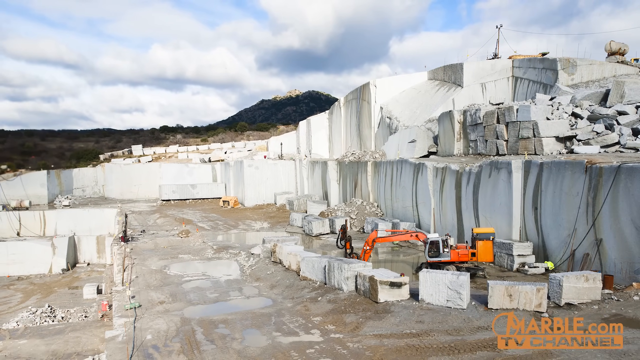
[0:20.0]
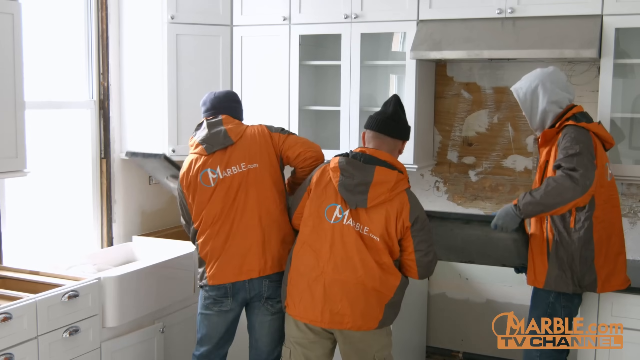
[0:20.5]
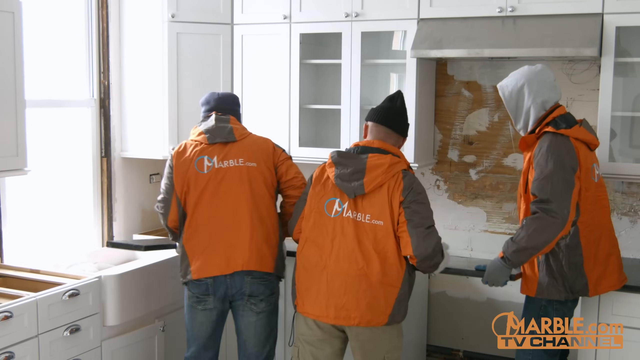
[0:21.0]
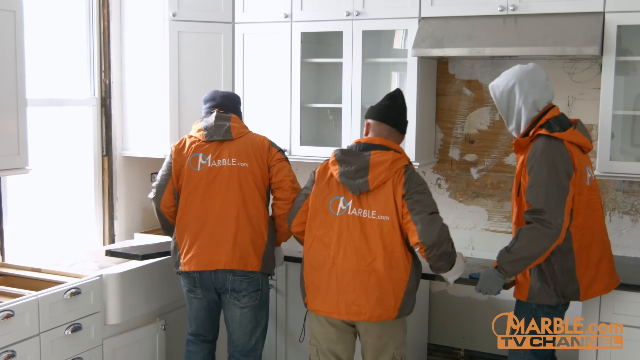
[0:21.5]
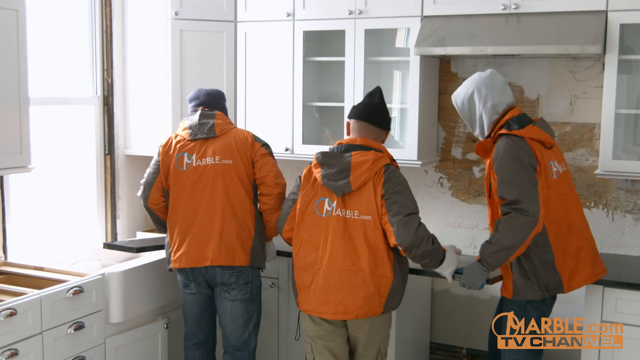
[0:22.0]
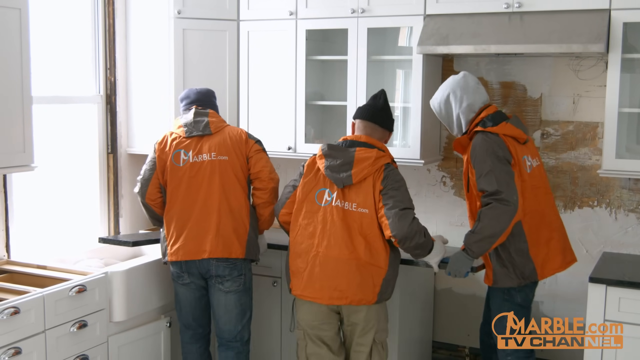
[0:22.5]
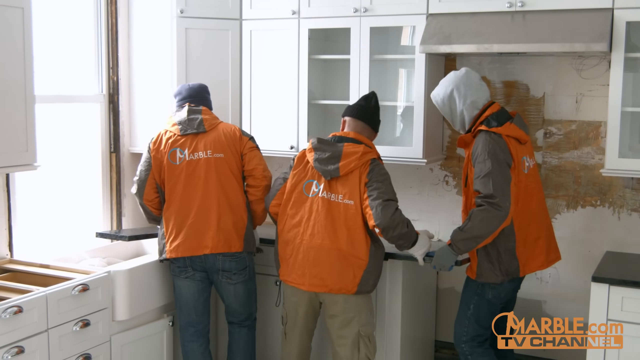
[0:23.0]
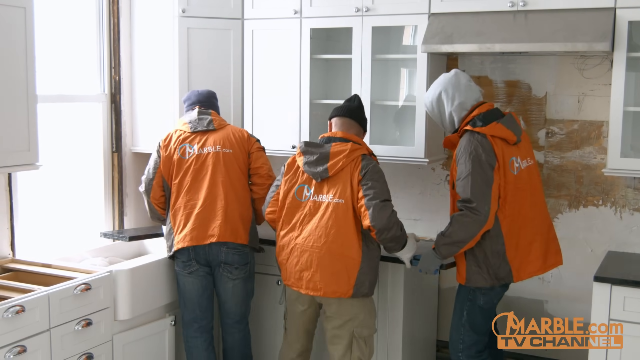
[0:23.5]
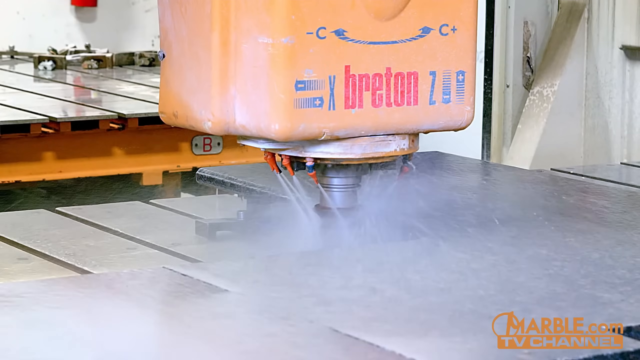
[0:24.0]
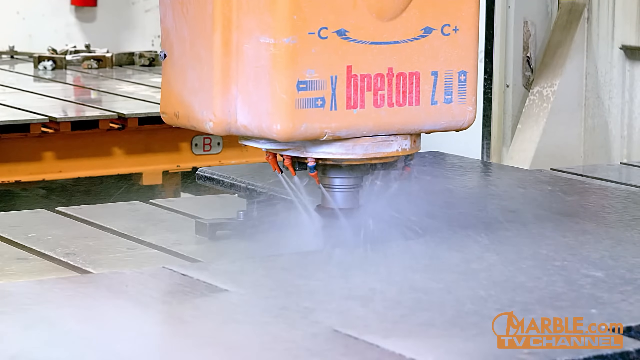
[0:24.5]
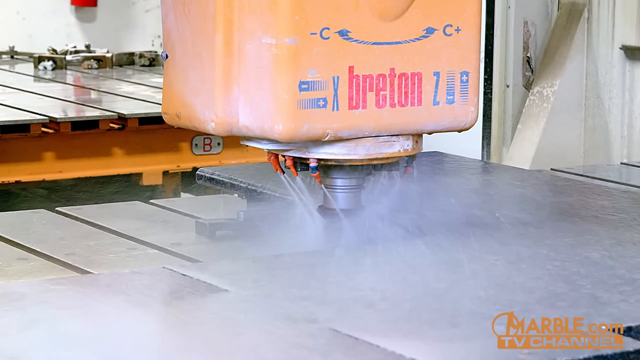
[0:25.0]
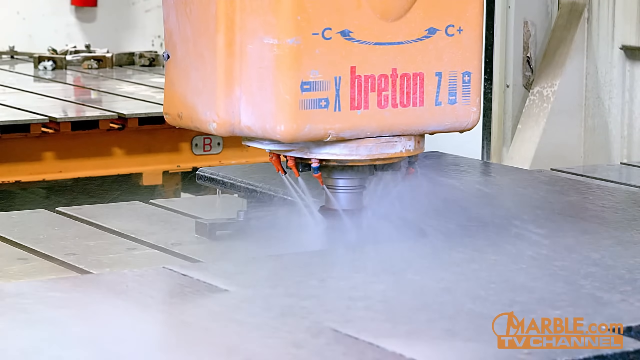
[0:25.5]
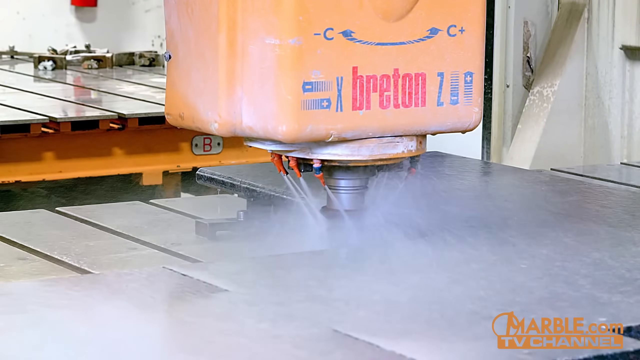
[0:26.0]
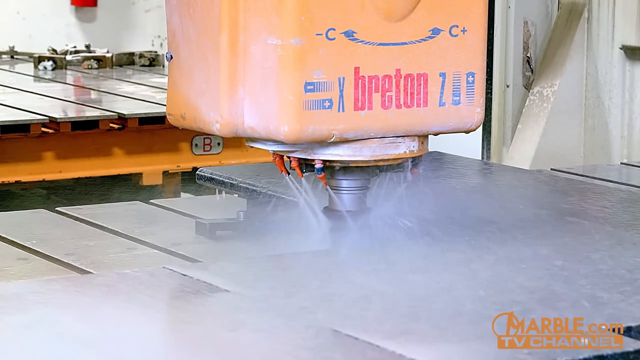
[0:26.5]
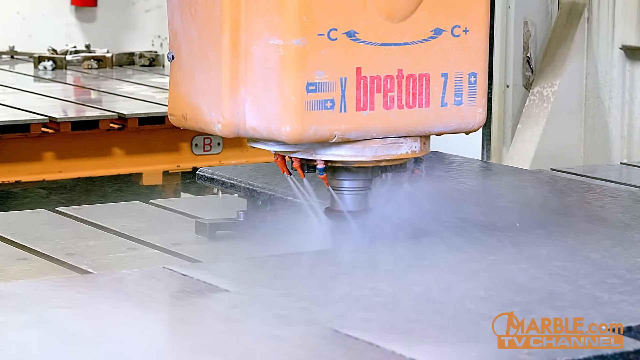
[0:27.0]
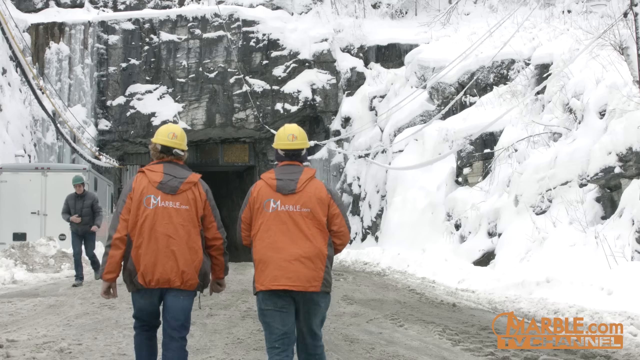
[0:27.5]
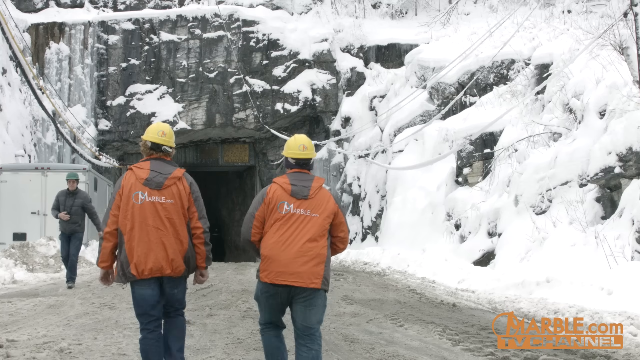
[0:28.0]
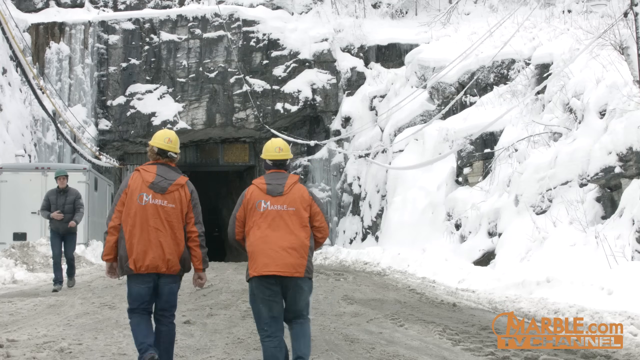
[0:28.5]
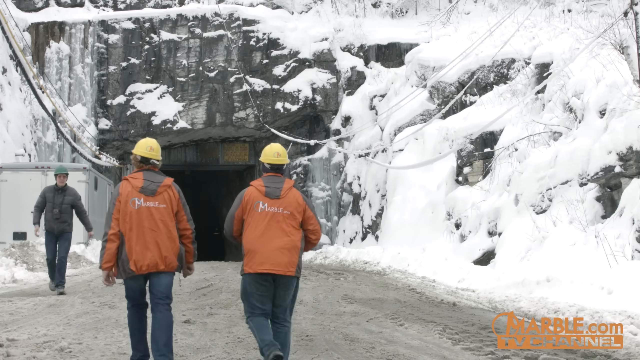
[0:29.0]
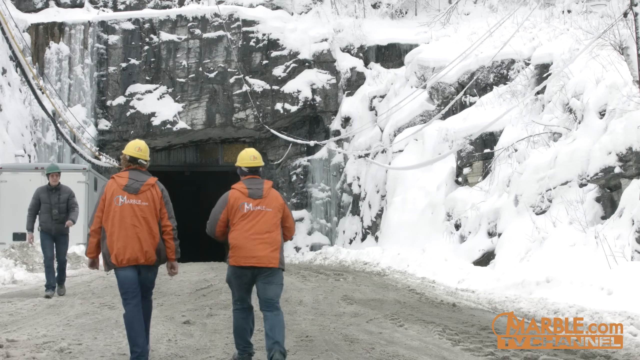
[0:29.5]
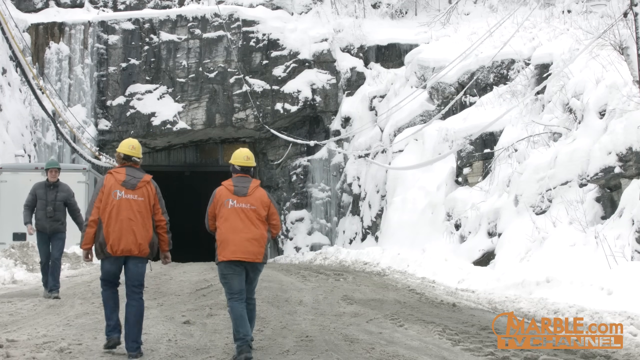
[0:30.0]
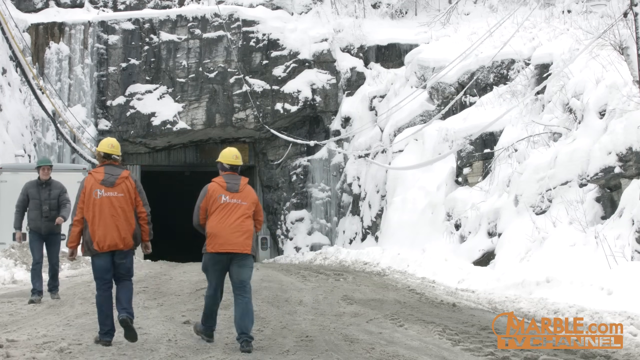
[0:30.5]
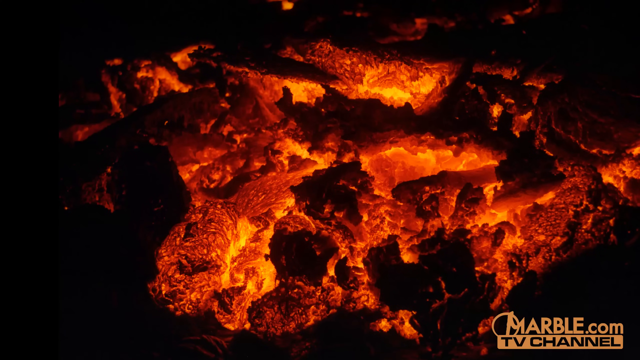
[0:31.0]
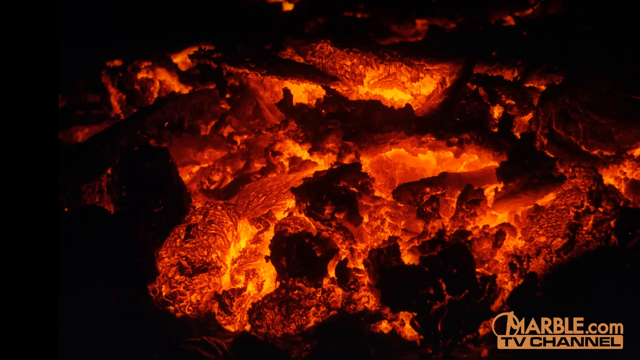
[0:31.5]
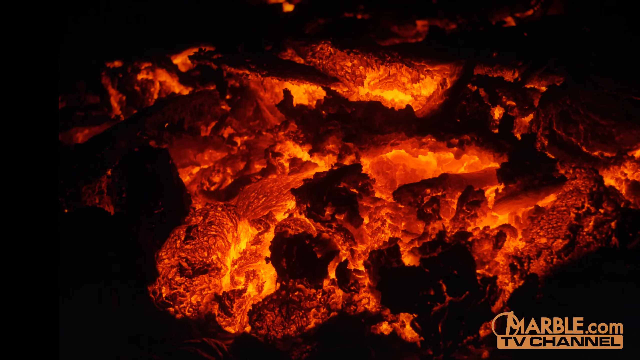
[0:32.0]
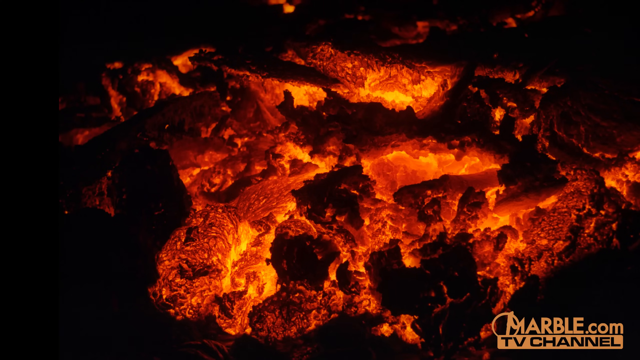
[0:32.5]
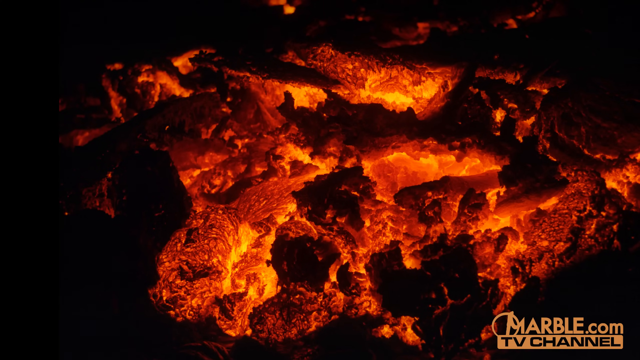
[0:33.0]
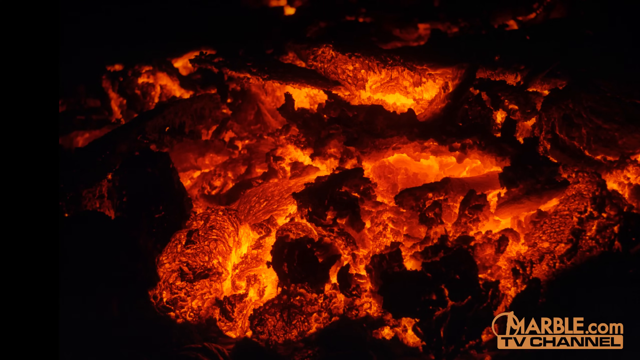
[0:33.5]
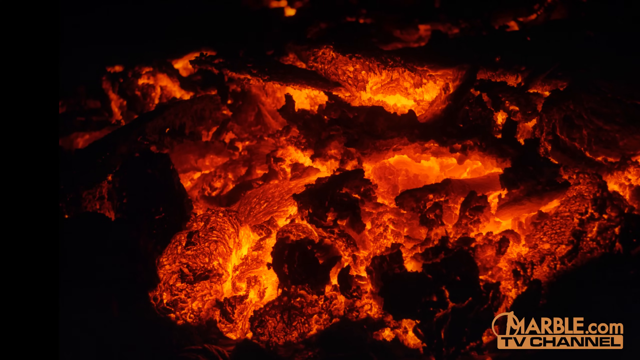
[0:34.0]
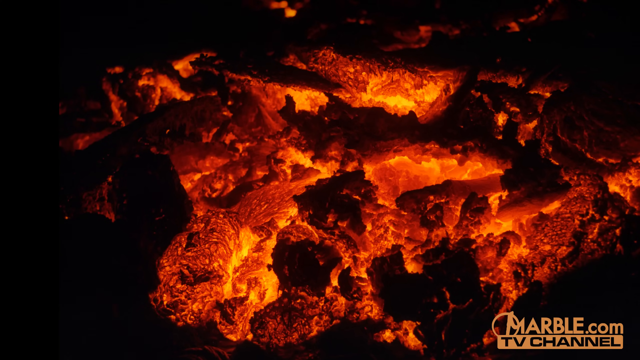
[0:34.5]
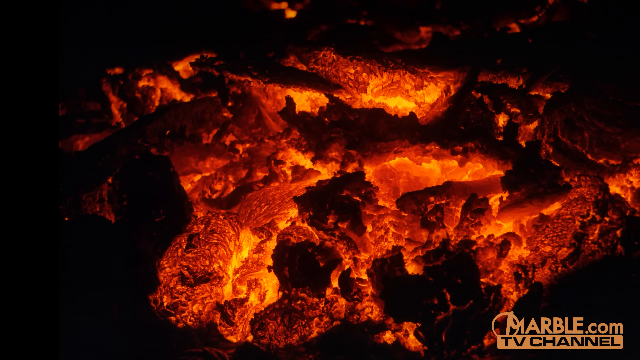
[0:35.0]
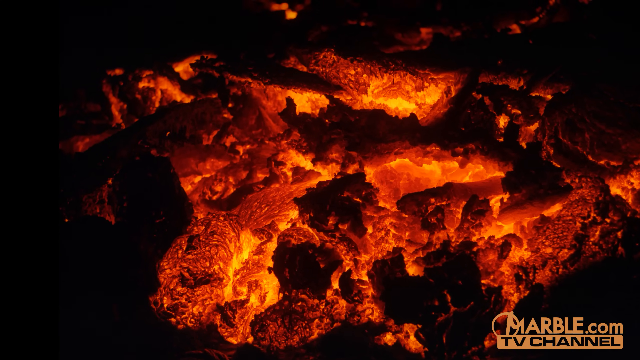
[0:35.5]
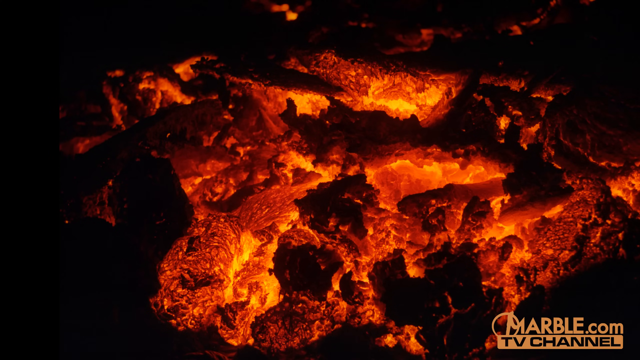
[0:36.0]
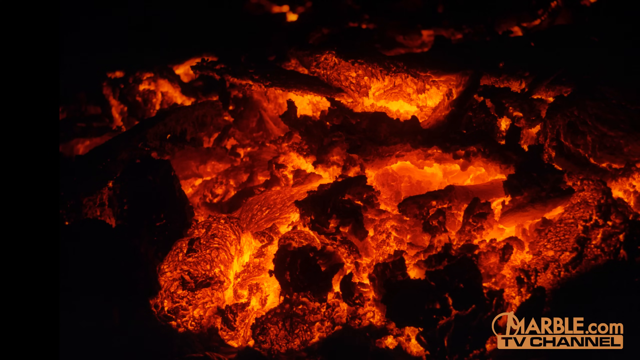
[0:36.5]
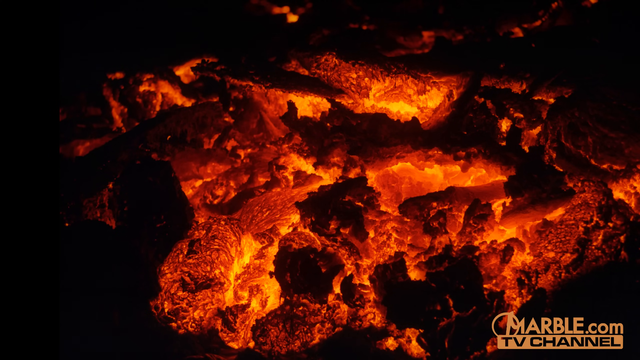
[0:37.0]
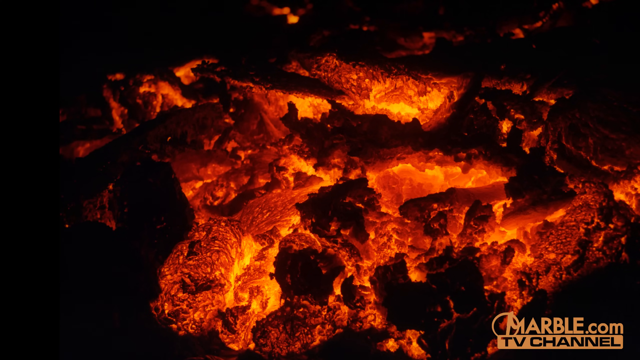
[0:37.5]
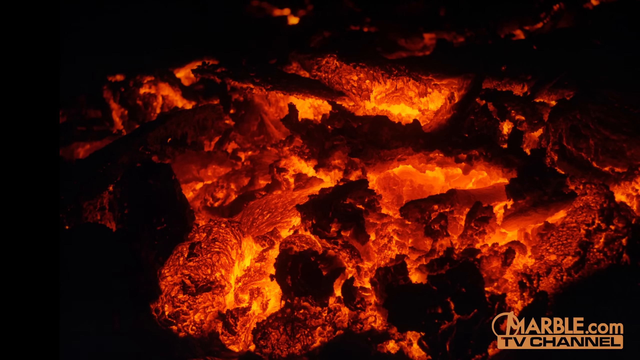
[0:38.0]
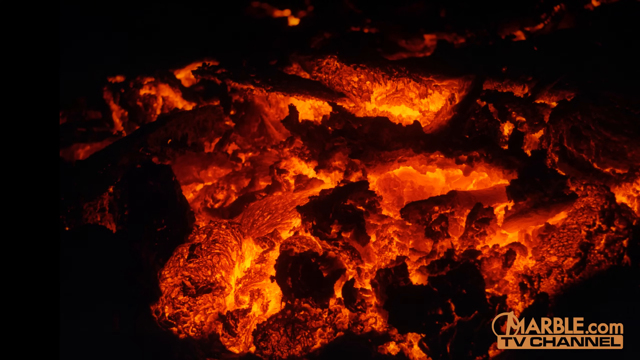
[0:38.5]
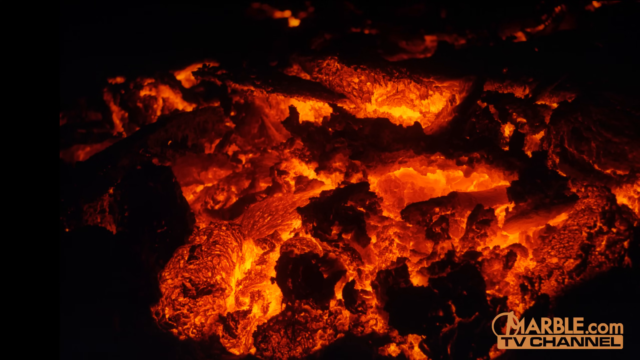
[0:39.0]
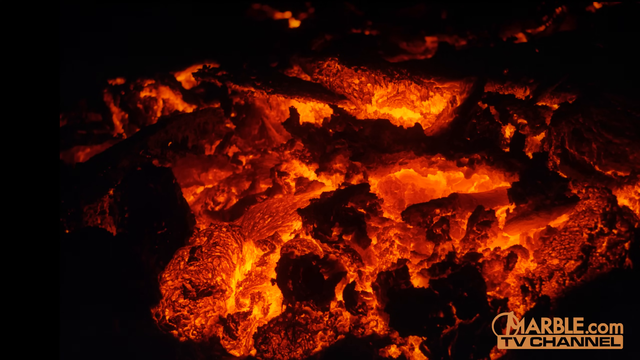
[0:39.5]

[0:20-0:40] The video shifts from the work site to a close-up of three people working inside an unfinished house. All three wear orange and gray jackets with the marble.com logo, and each holds on to a big piece of black marble that they are fitting onto a counter. The wall on the right side is clearly not painted at all, showing that the house is unfinished. They fit the piece firmly into the corner of the counter. Next, some kind of tool with several nozzles sprays what looks to be water; it looks like it is going over the piece of marble they were using, though its function is not entirely clear. The video then shifts to two people walking in a very snowy environment, followed by a close-up of a tunnel and then a close-up of magma glowing bright orange with some dark black parts in it.